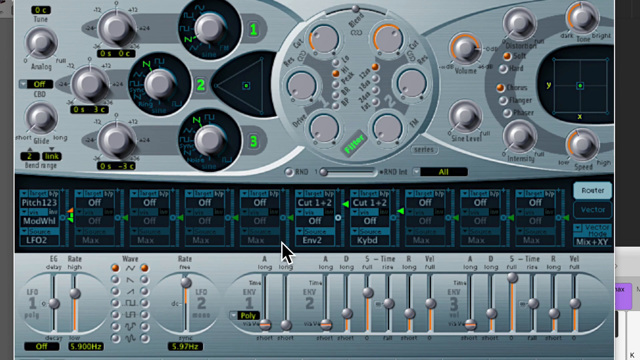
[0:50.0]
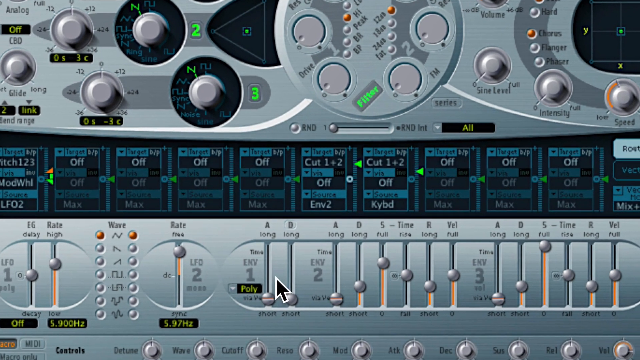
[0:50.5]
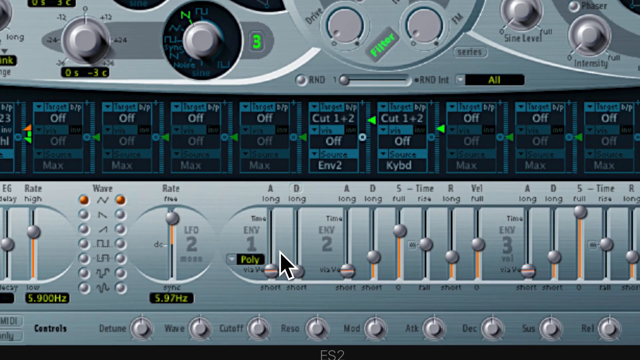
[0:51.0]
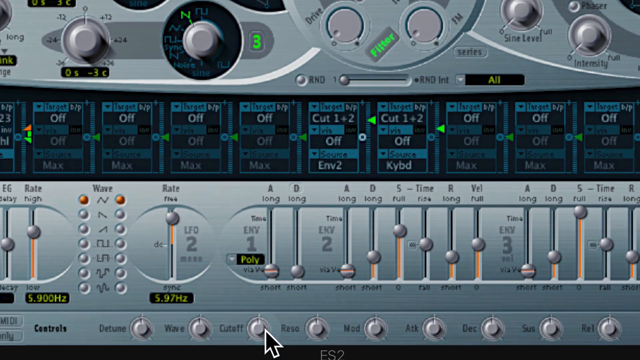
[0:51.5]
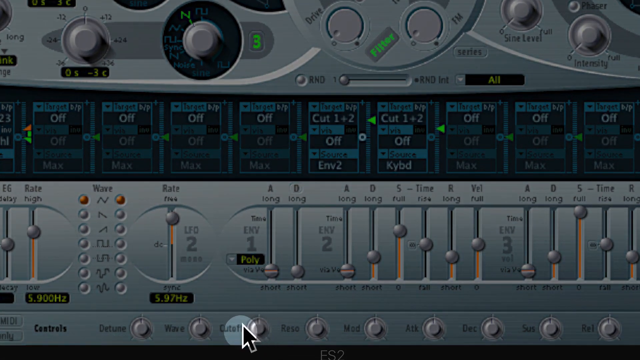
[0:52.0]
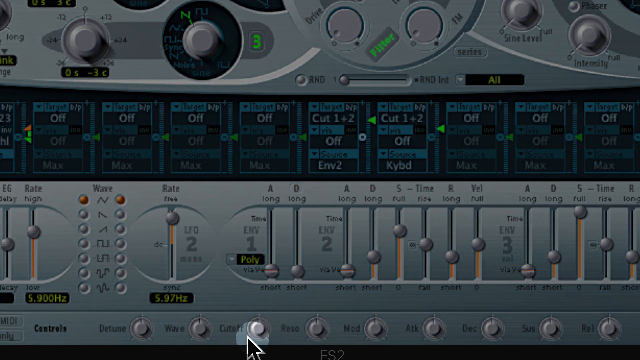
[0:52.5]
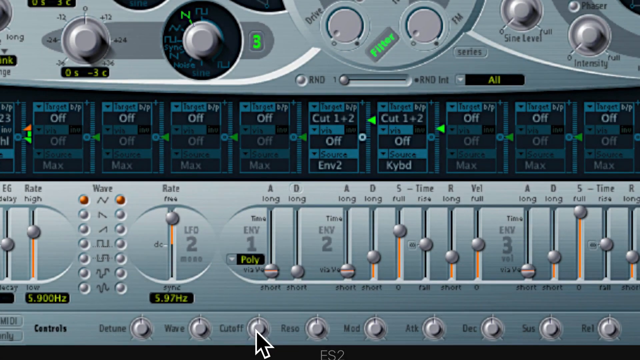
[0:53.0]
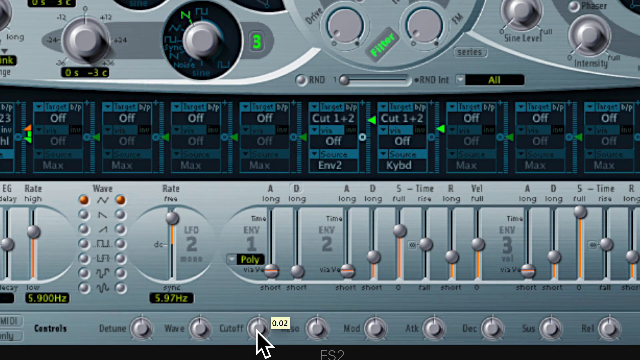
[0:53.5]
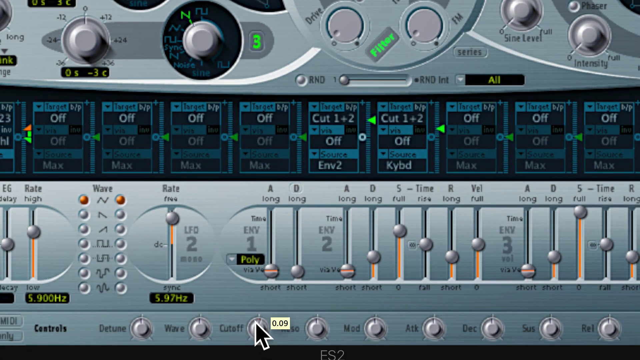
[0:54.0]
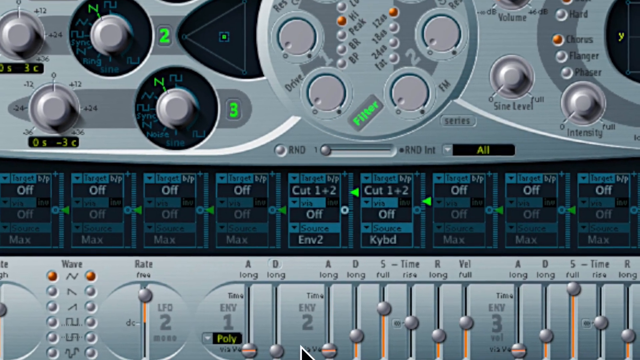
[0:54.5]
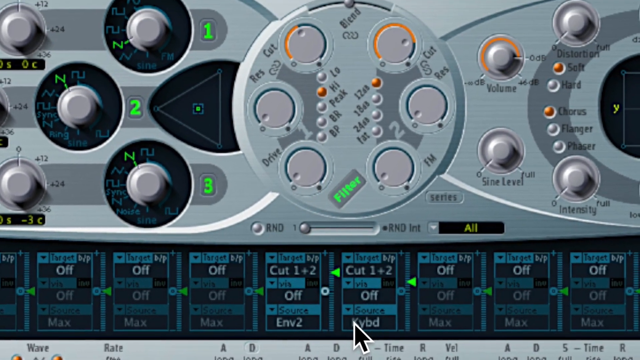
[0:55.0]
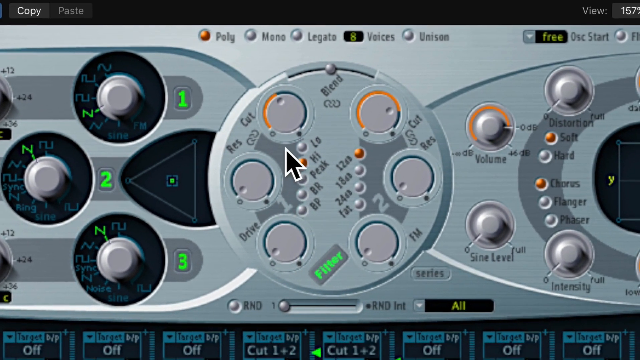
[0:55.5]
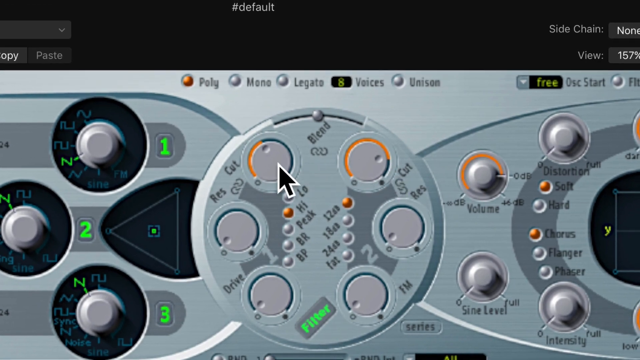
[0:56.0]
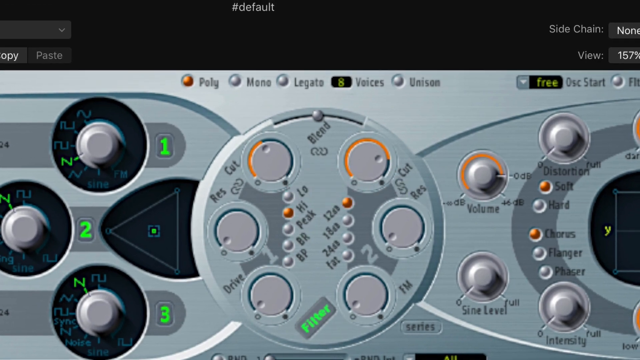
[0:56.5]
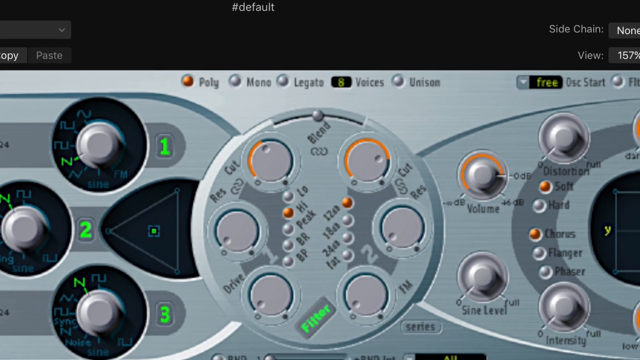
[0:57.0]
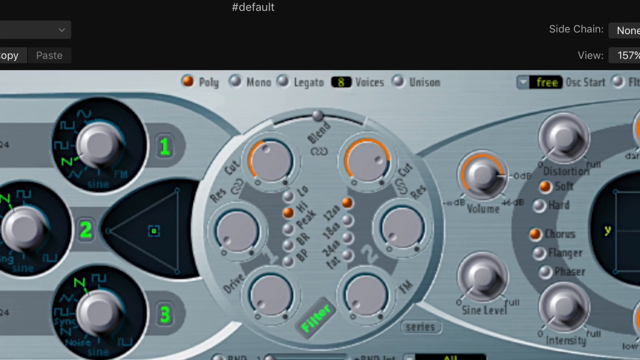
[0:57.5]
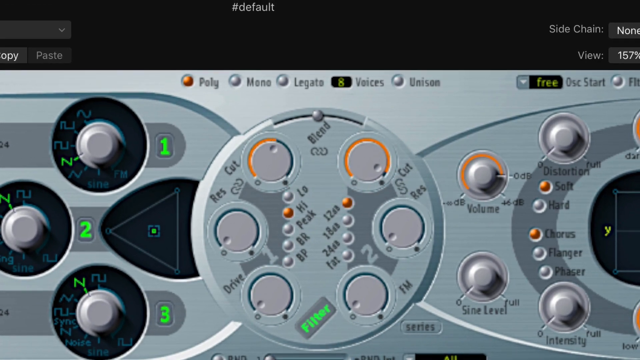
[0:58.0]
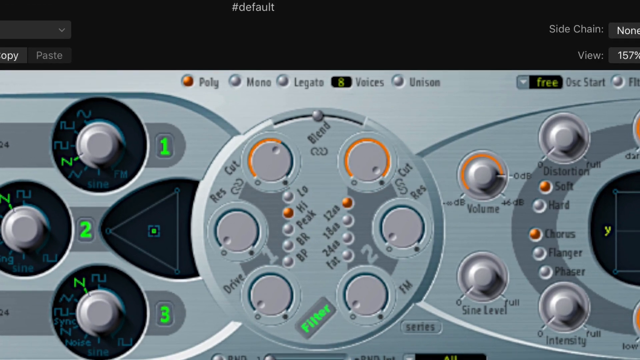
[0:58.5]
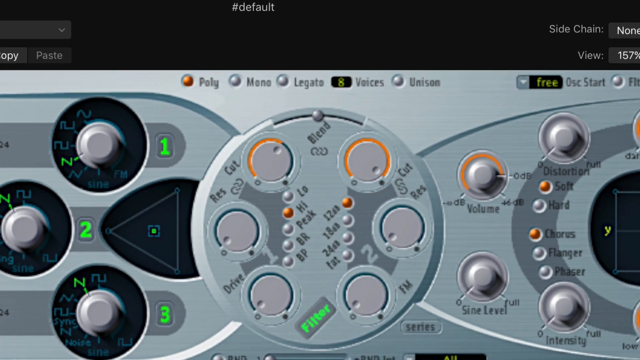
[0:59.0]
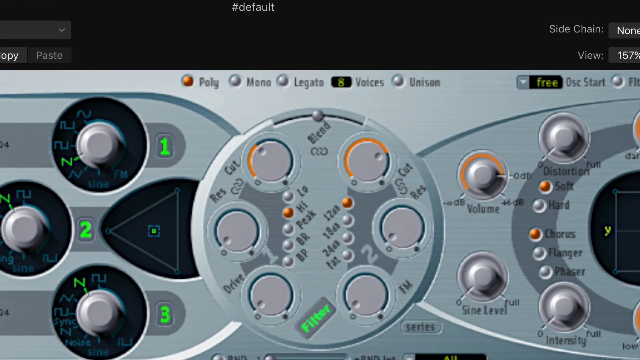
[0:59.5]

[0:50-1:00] The user zooms in on the interface. The backdrop darkens slightly as they highlight a knob at the bottom that reads "cutoff", which they seemingly increase to 0.11. They return to the two knobs they were adjusting before and keep turning them left and right. They go back and forth between the bottom knob they first highlighted and the two knobs in the top middle of the interface, apparently tuning the output audio of their piano app.